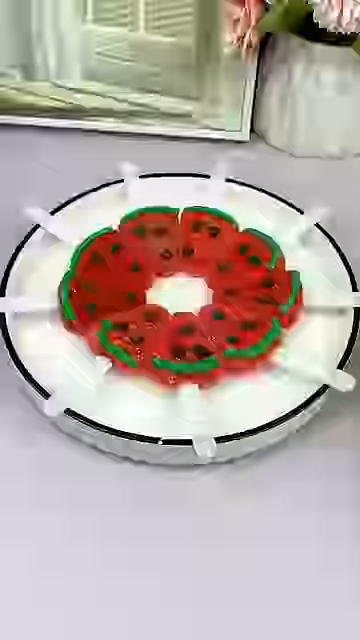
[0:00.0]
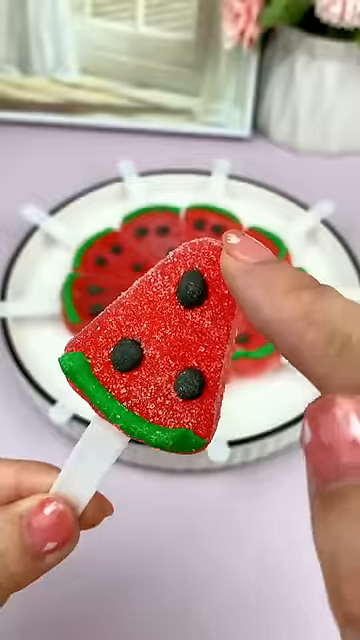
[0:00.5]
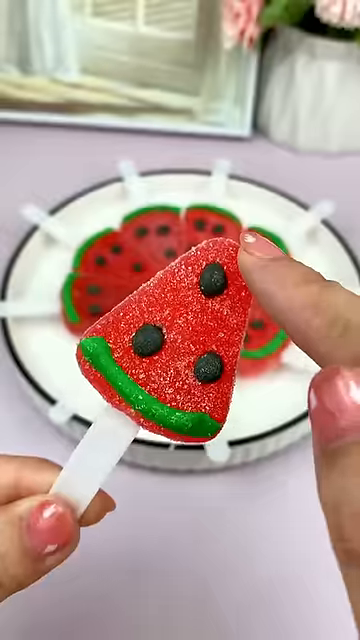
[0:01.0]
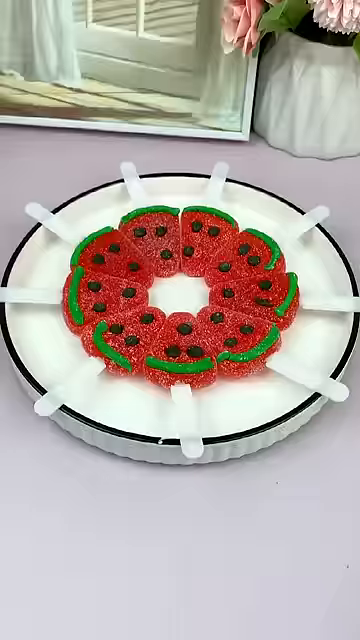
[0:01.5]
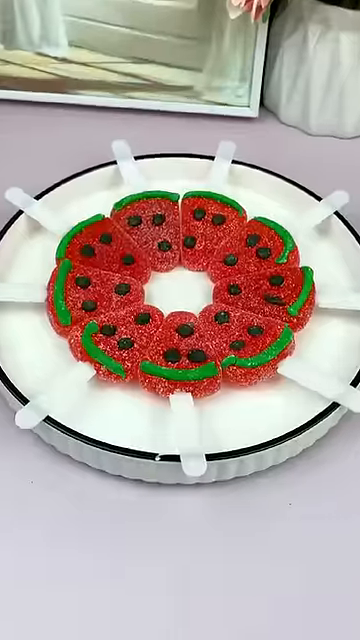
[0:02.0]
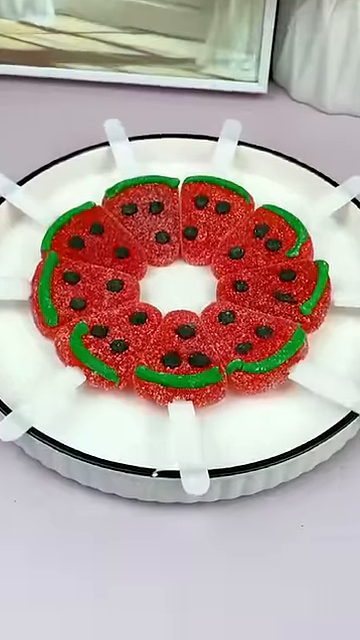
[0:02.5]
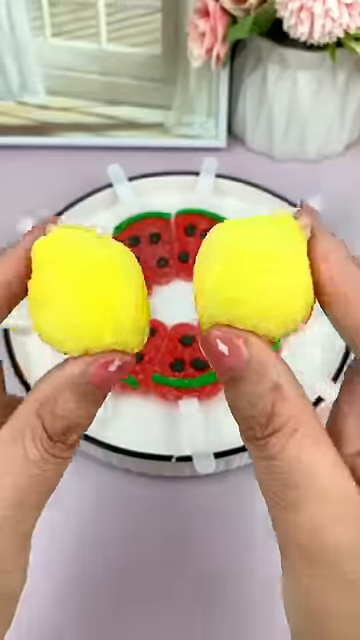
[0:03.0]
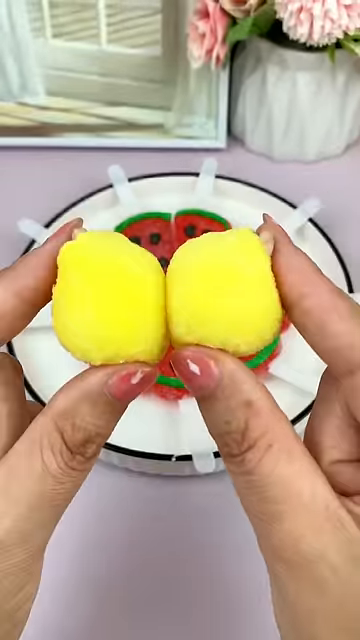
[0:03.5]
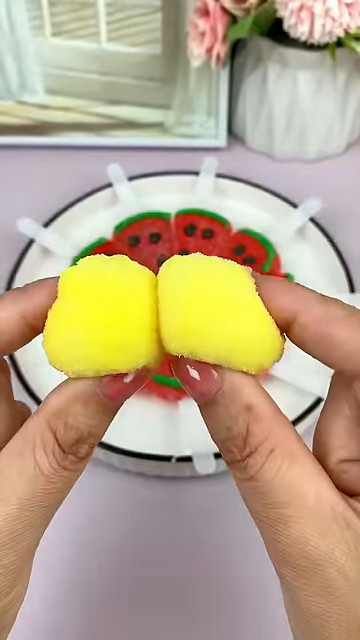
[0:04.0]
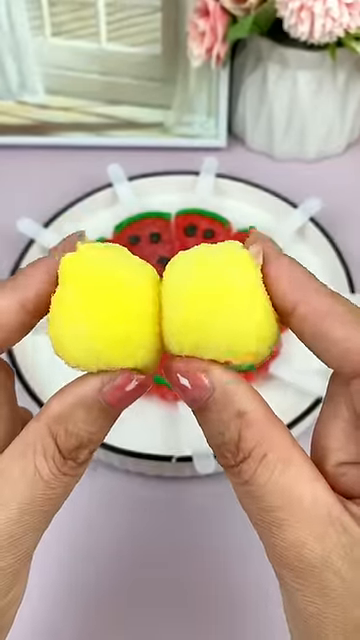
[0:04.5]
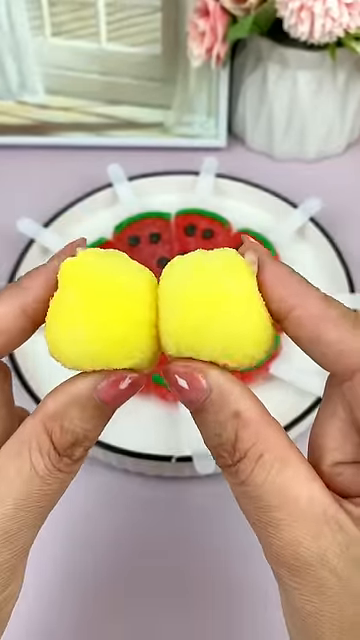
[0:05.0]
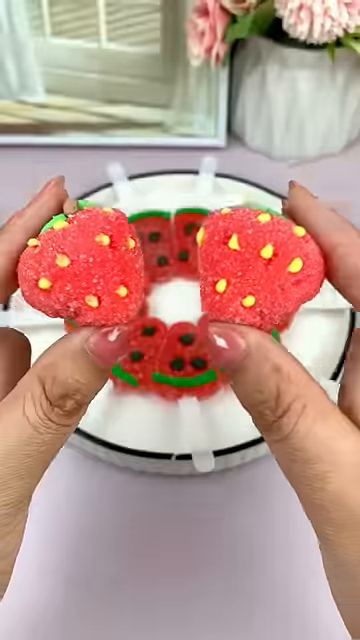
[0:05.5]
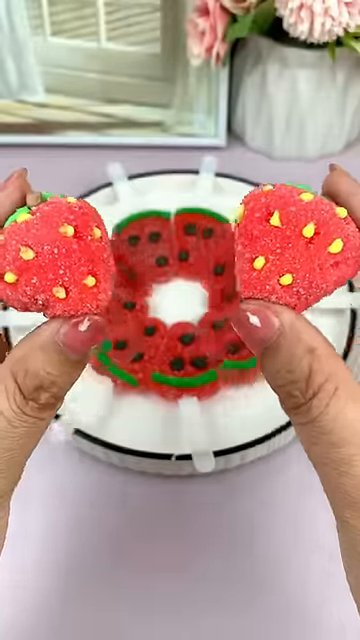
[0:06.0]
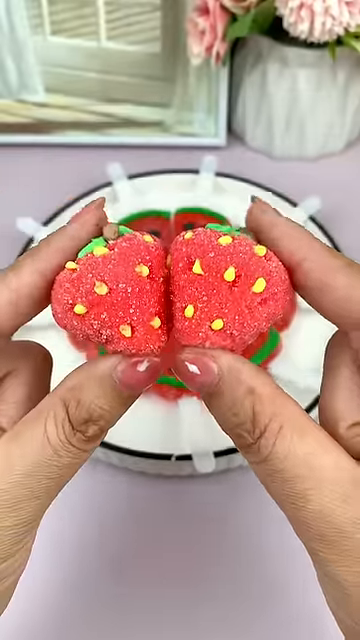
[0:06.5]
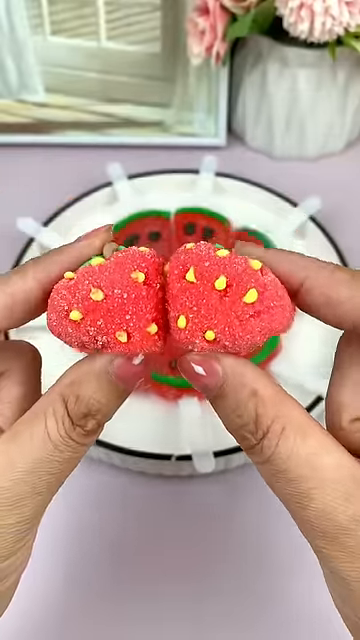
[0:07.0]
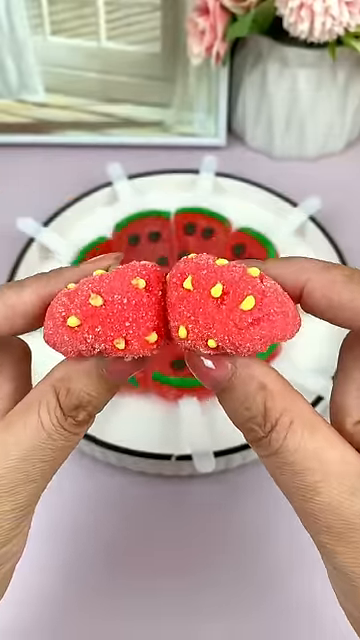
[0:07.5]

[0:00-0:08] A white plate is on a cream-colored counter, seen from a slight downward angle. Nine popsicle sticks hang off the edge of the plate, and toward the center the end of each stick has some sort of homemade lollipop that looks like a red strawberry shape. Each lollipop has a few black dots and a green curved stripe near the wide edge of the strawberry design. The lollipops all face the center of the plate, leaving a circular white center visible; they could be gummy or gummy-styled lollipops. The video quickly cuts to another view from the same angle, where a woman's hand holds one of the gummy lollipops while a finger of her other hand kind of manipulates it to show how bendy and squishy it is. The video cuts back to the plate, with the lollipops arranged in a circular design facing the center and the sticks facing outward and hanging off the edge of the plate, all there and uneaten. The camera kind of zooms in on that shot for a second. It then cuts to the same shot, and the woman's hands appear in front of the top-down view. Between the thumb and index finger of each hand she holds a yellow ball of some sort of sugary substance that looks kind of marshmallow-y; she smacks them together with her fingers and then squishes them to show that they are malleable. The video then cuts to the same background of the kitchen table and the plate of lollipops, but now her fingers hold little strawberry-shaped marshmallow designs in the same way, next to each other, kind of squishing them together to show that they are malleable.